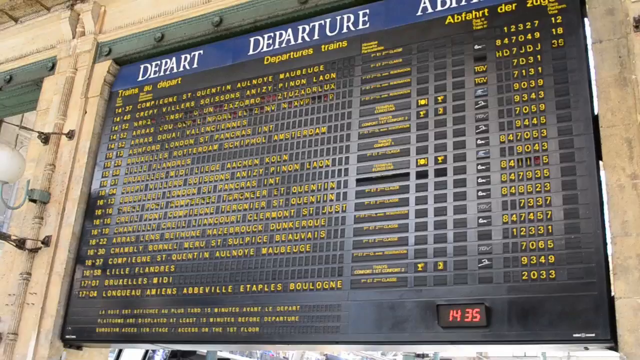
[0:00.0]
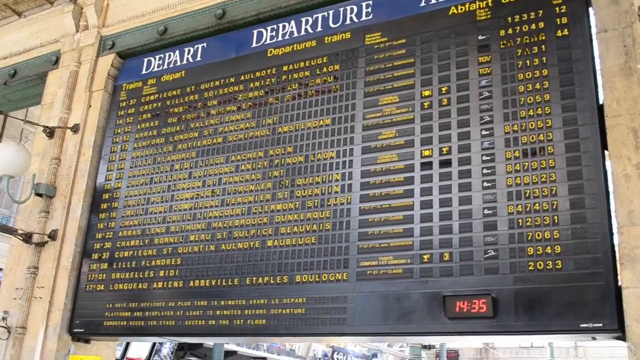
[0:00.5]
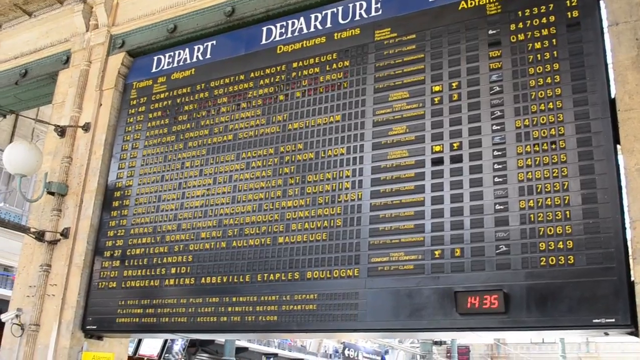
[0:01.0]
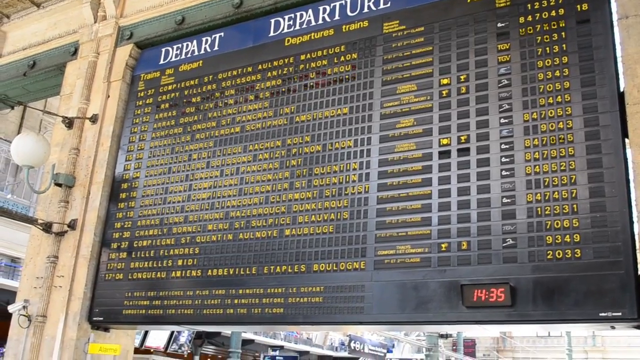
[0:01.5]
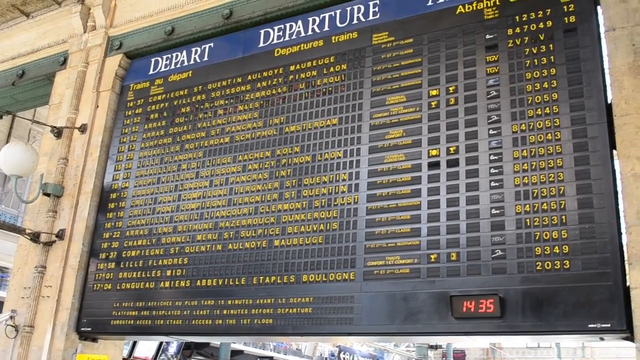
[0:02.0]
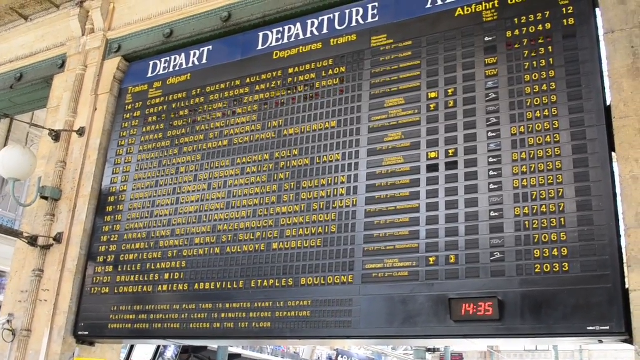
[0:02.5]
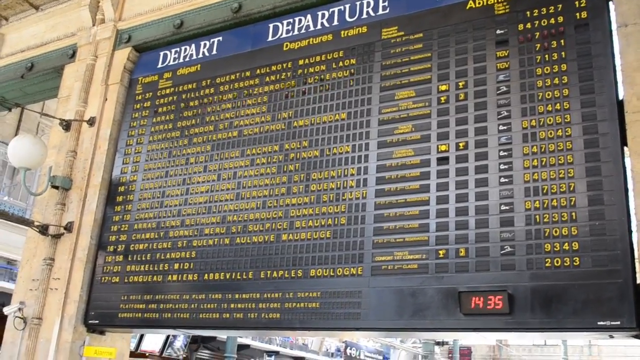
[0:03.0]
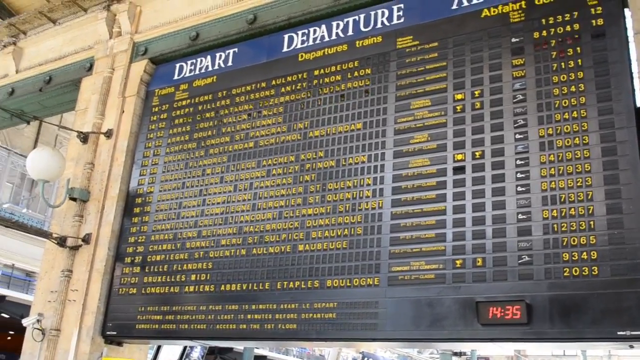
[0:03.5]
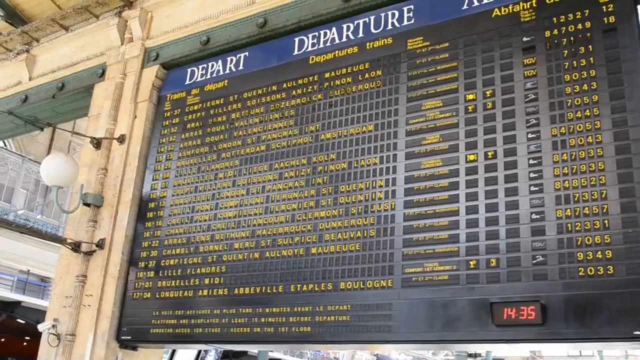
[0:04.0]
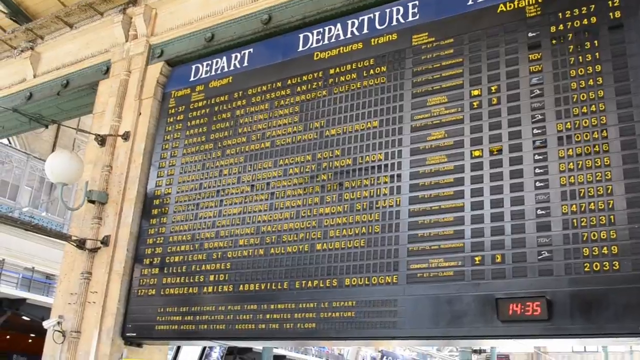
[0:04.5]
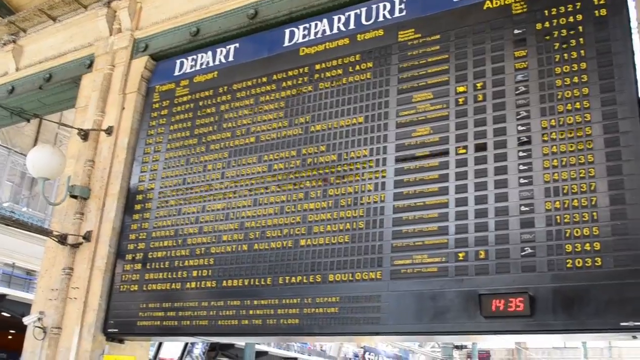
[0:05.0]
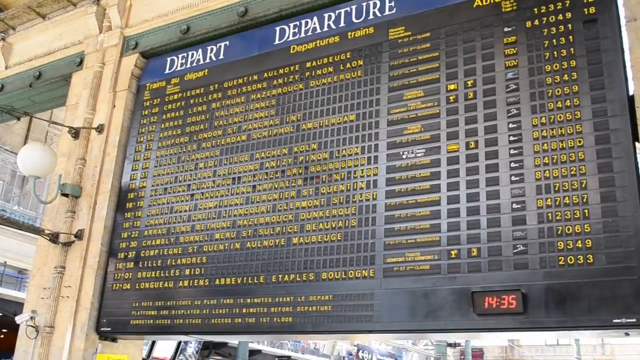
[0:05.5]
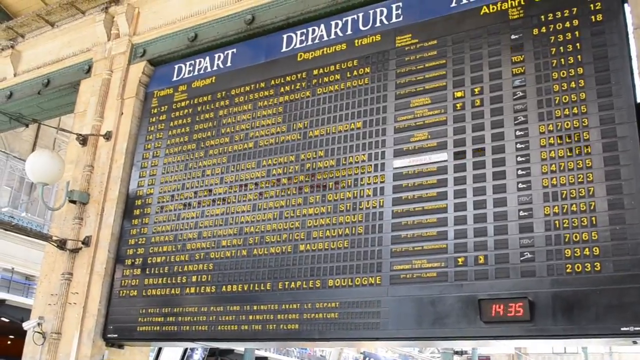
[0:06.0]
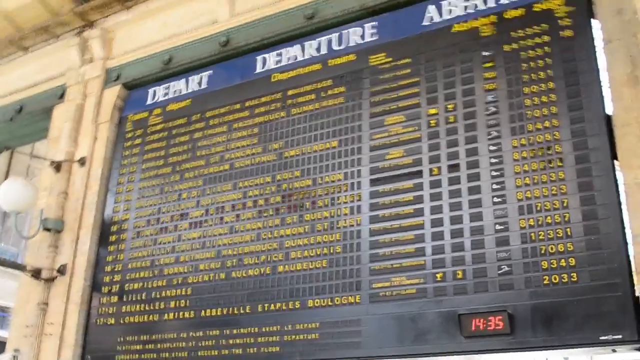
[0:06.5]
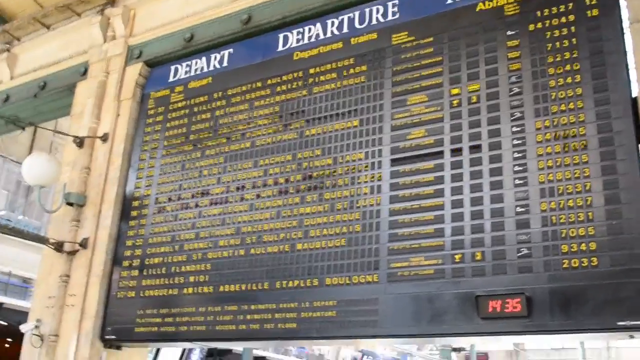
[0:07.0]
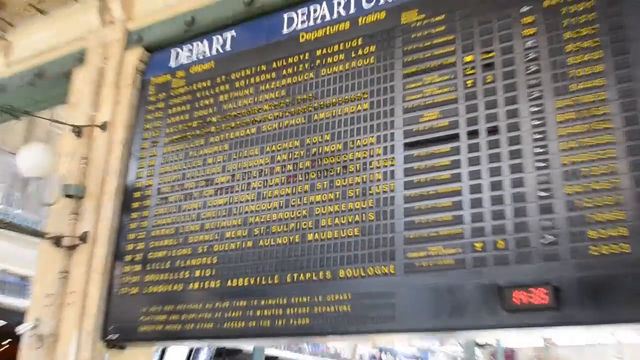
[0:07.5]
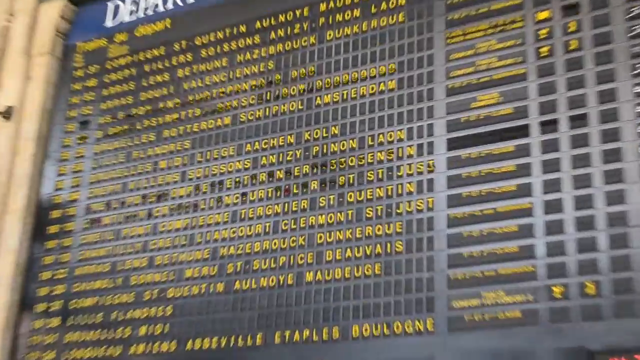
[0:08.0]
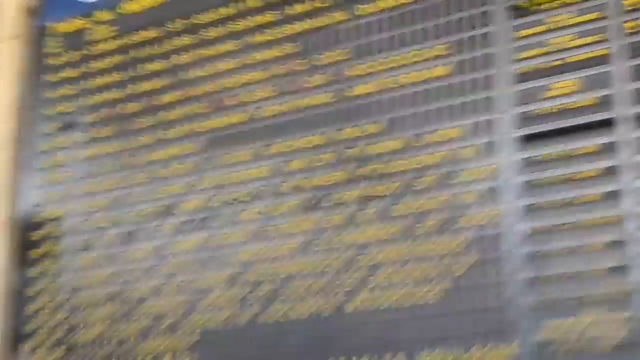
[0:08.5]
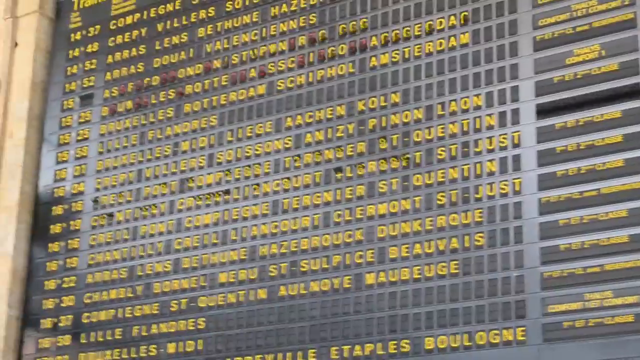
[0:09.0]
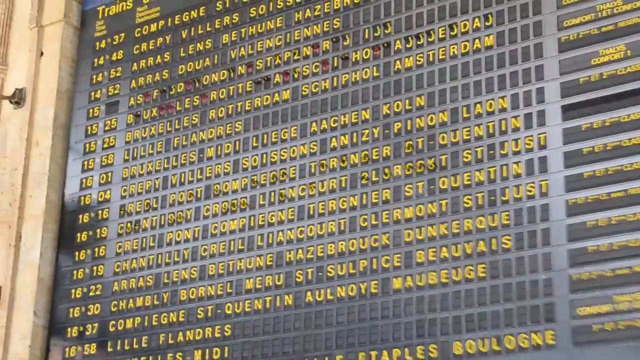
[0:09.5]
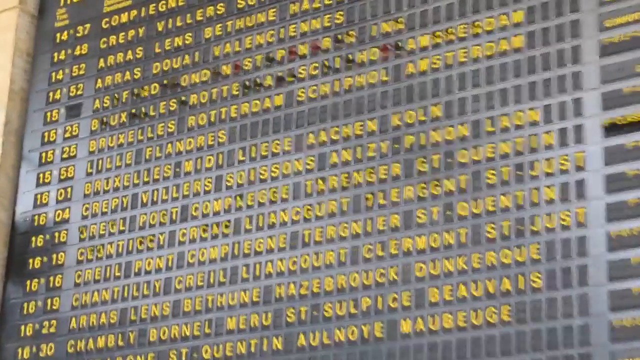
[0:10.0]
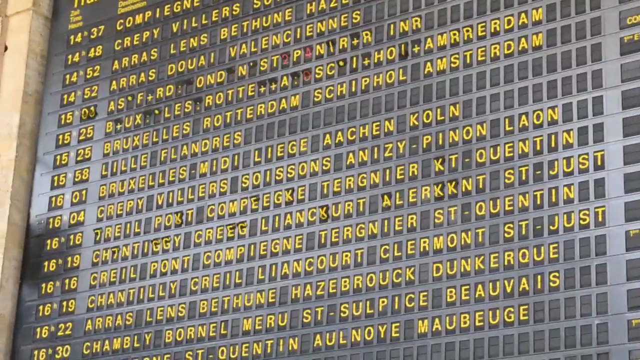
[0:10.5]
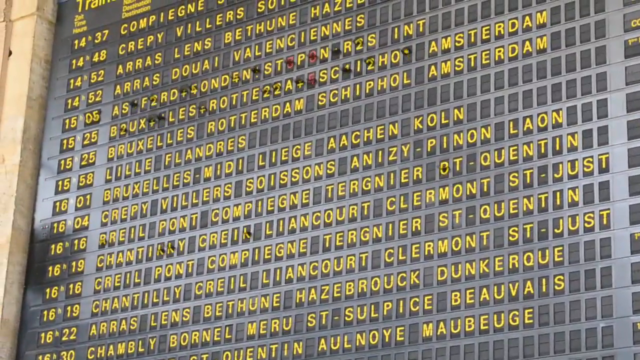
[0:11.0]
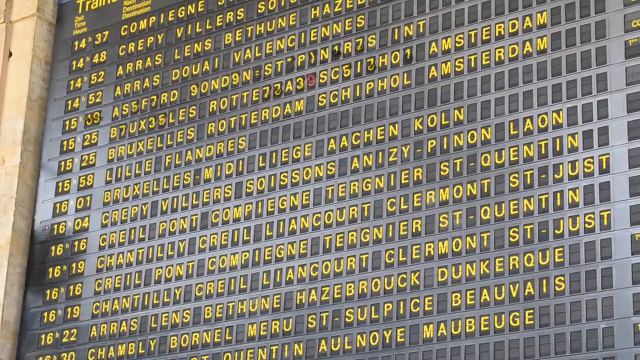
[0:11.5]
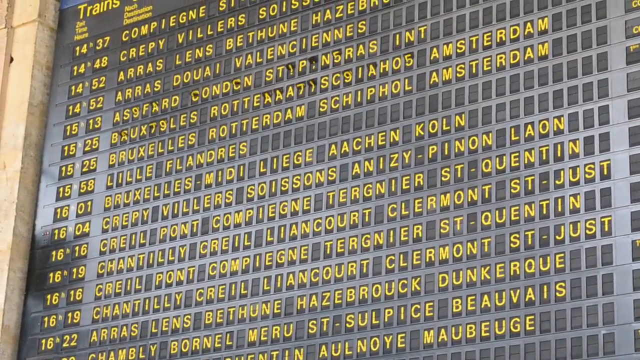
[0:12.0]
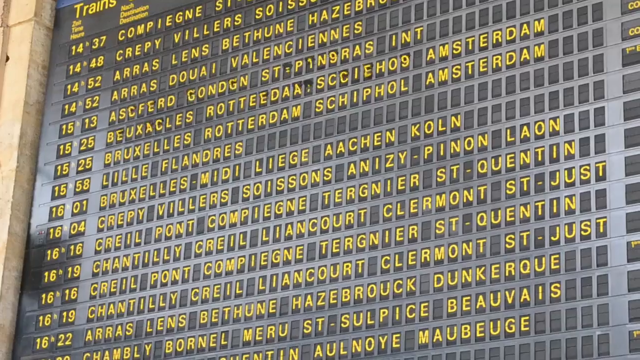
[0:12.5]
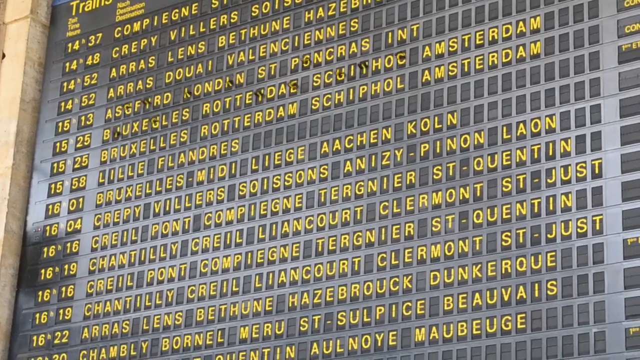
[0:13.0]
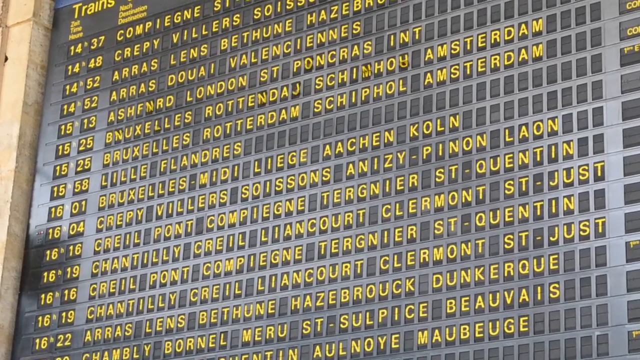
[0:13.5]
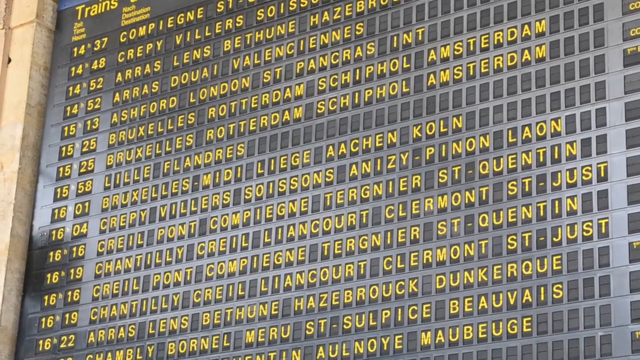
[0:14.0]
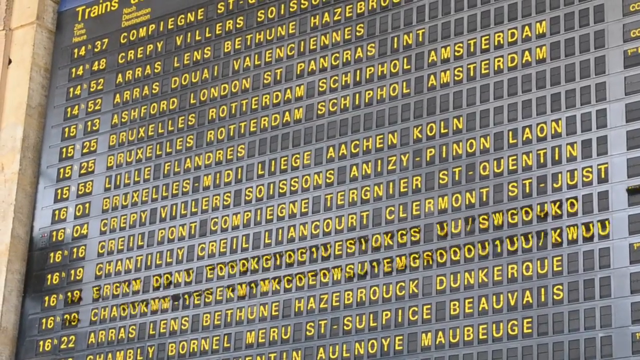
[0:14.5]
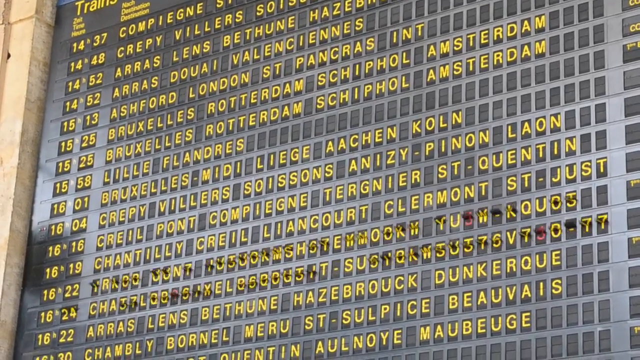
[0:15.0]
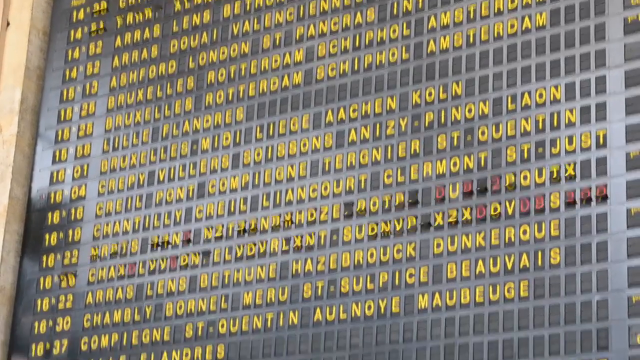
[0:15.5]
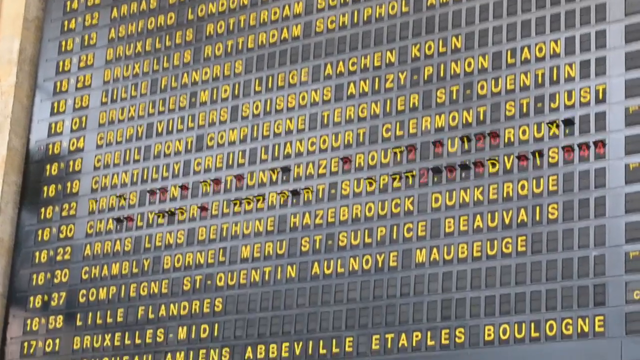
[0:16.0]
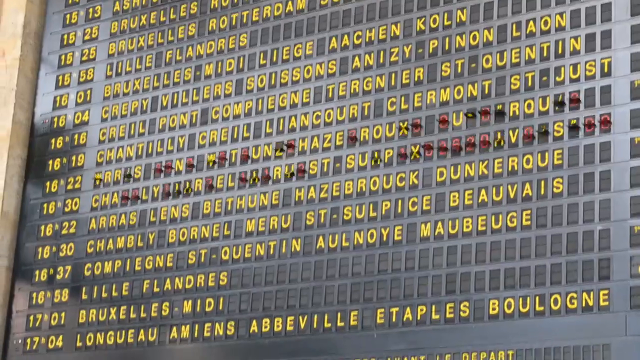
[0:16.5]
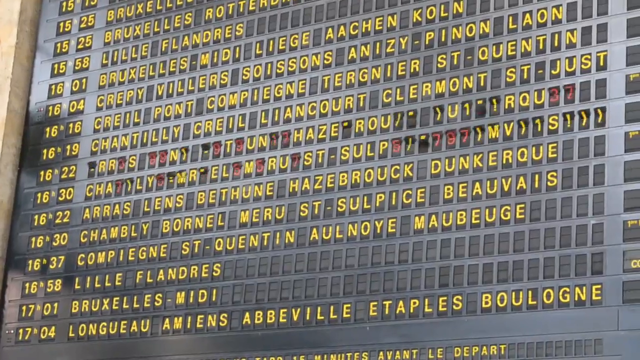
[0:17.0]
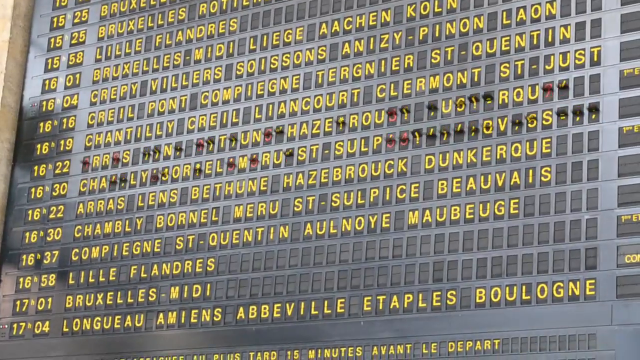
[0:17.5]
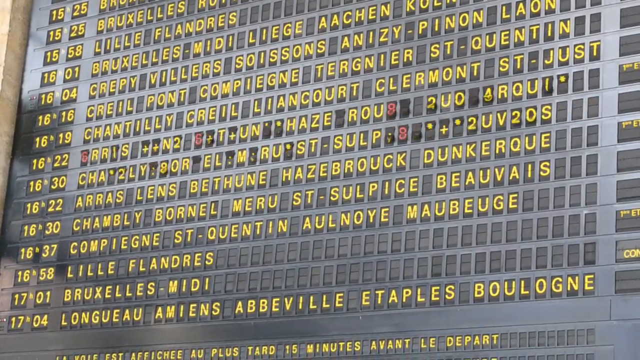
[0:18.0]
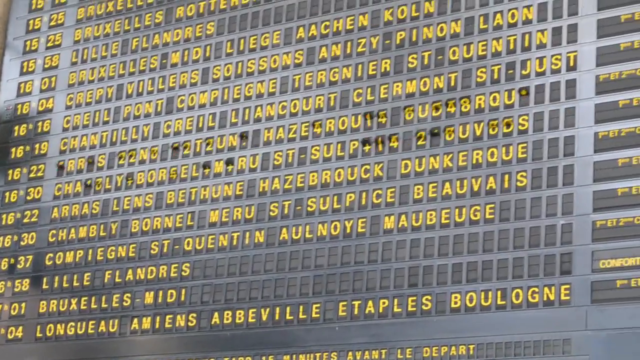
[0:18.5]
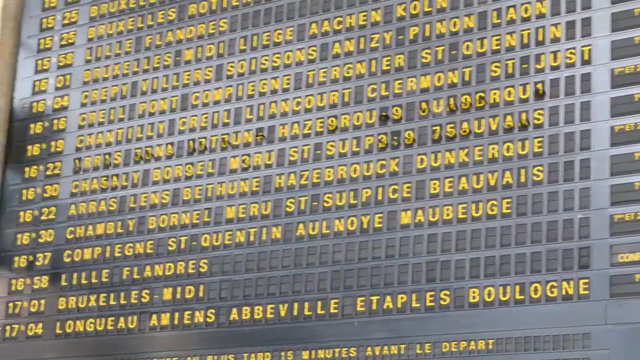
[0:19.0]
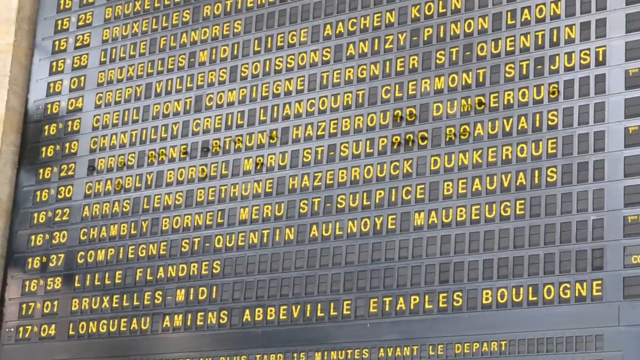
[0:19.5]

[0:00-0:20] The video appears to be taken outside. On the right side, a little of a concrete pillar is visible. Across the top center runs a green trim with six little green bolts sticking out, and more of the concrete structure is visible above it. On the left side, about an inch in and angling down to the left corner, there is a concrete pillar with a light hanging from it. Below the green banner, between the two concrete pillars, is a big giant black board. Its top is blue and says "departure" in three different languages. Below that, on the left side, there is "trains", with numbers listed all the way down, apparently about 20 of them, and information listed underneath. Next comes "depart", and in the center it says "departures, trains". Another column is too small to read but has little flips under it. Everything is black and the lettering is yellow. Starting from the left, there are two sets of numbers, then about 20 squares across showing the different places the trains are going to, flipping all the time. Next is a rectangle with different places, then three squares to its right with different information, most of them black. Then comes another row of just squares, and a row of numbers that are scrolling through. The shot is mostly held steady, with the camera moving around a little. In the bottom right it says "1435". When the camera goes down, a red car is visible in the bottom left. The camera then zooms in on the names of the stations and areas, giving a close-up of them all flipping and switching; as they flip, some of the numbers and letters are red.